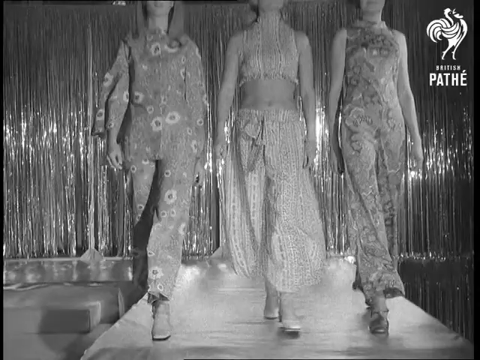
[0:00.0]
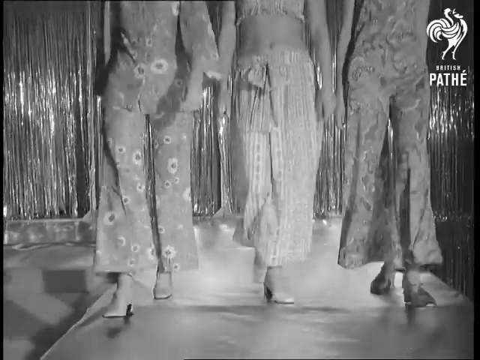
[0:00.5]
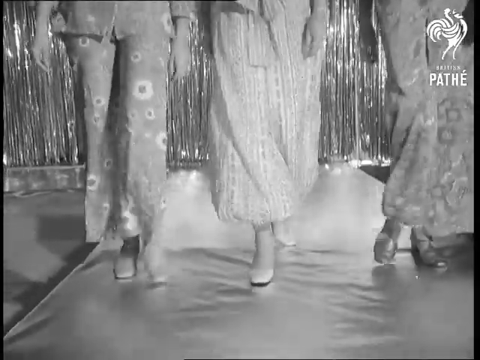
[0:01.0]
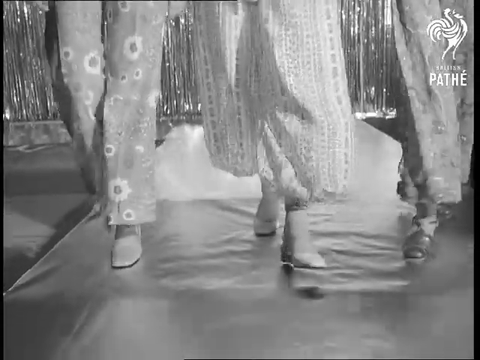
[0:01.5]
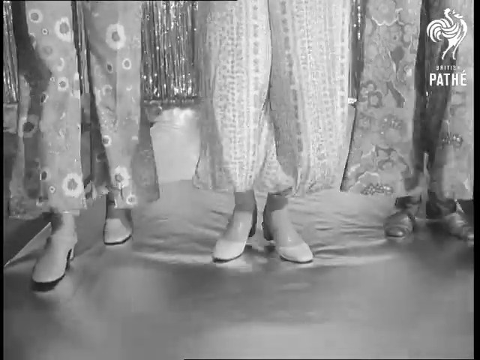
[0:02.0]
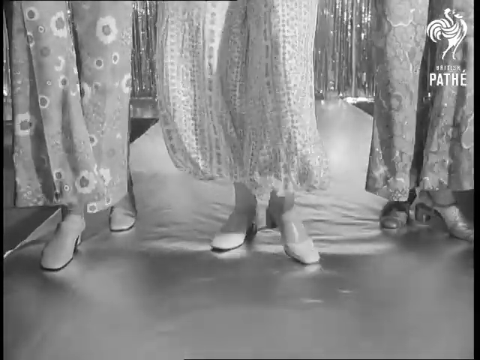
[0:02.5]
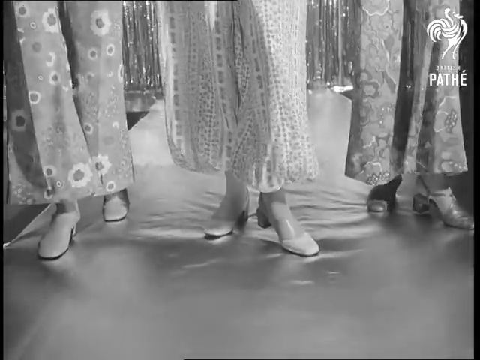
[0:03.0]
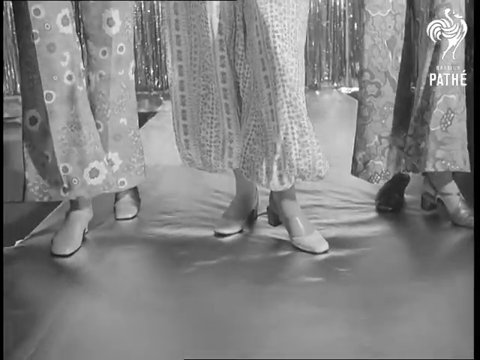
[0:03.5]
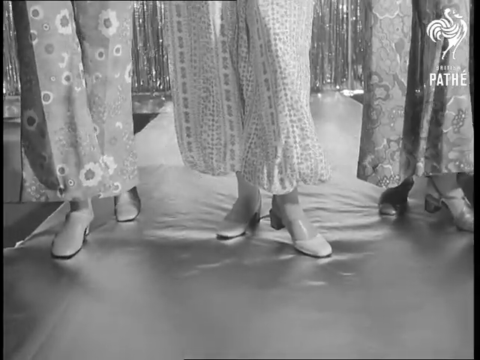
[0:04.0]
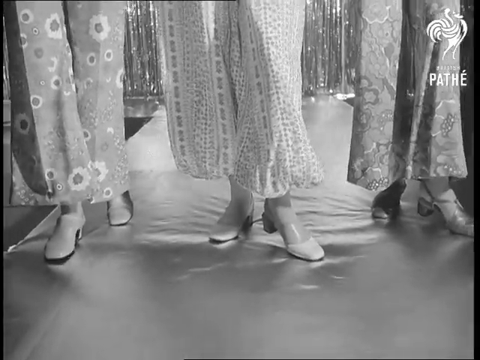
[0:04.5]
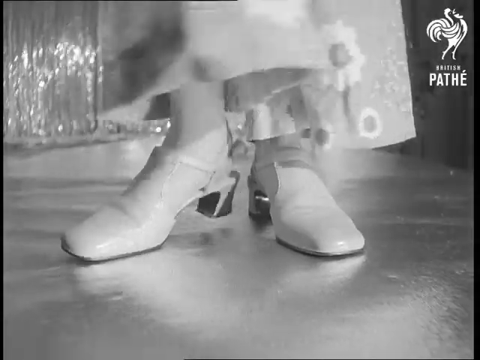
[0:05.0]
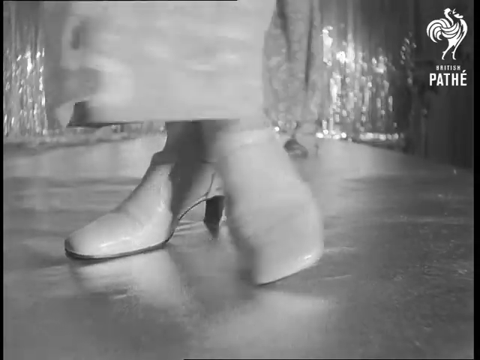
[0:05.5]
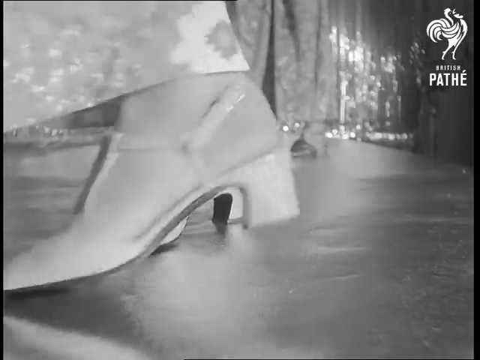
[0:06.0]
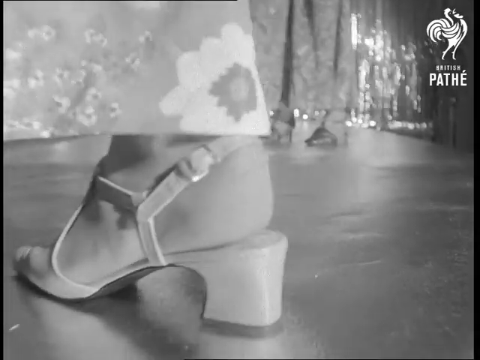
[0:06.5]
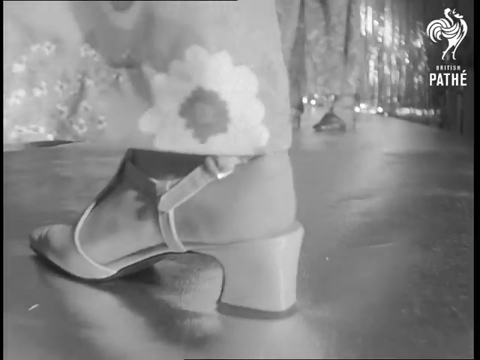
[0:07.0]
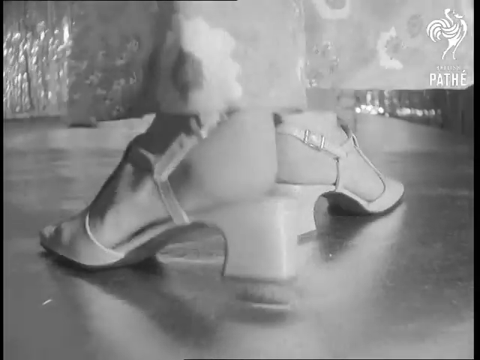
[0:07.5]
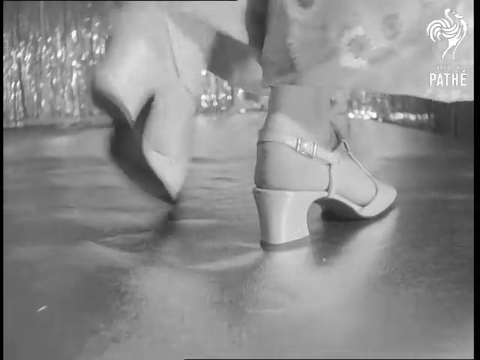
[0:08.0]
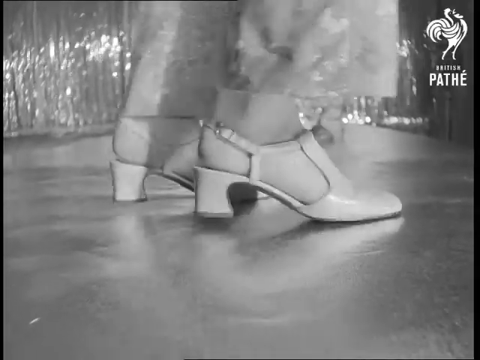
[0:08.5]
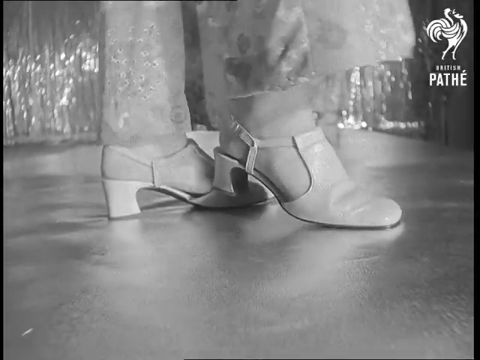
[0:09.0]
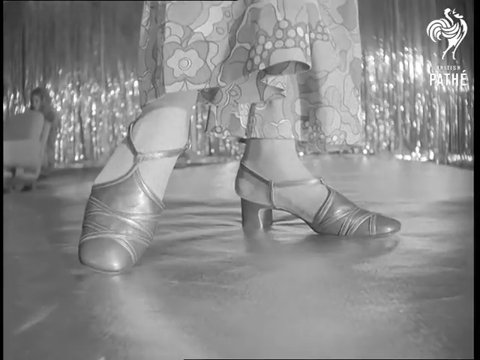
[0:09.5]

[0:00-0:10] The footage looks like it is from the 70s or 80s. A shoe fashion show is taking place, with three ladies modeling. Their shoes look stylish, and they walk as if they know exactly what they are doing.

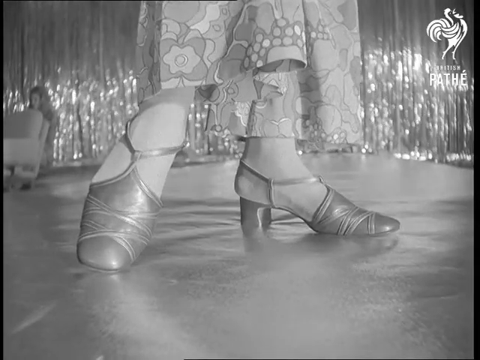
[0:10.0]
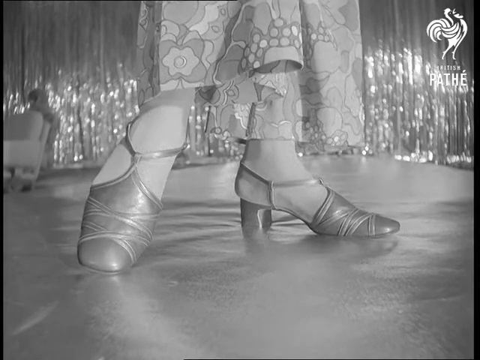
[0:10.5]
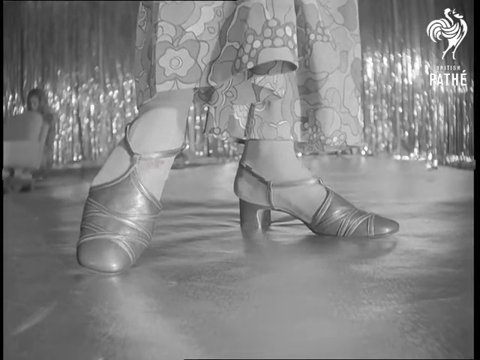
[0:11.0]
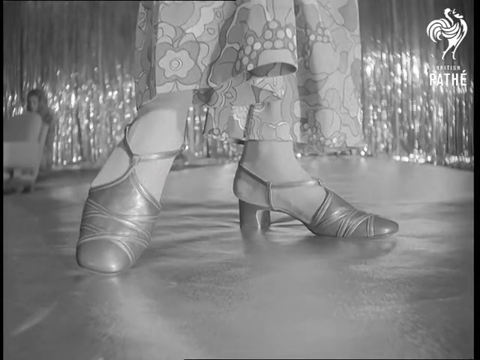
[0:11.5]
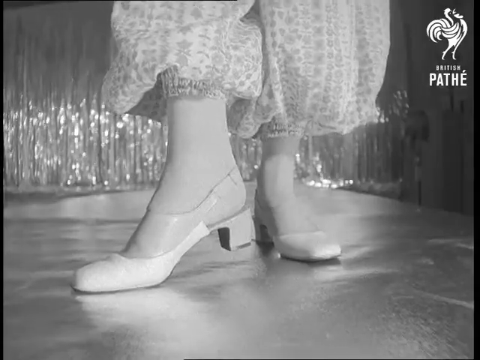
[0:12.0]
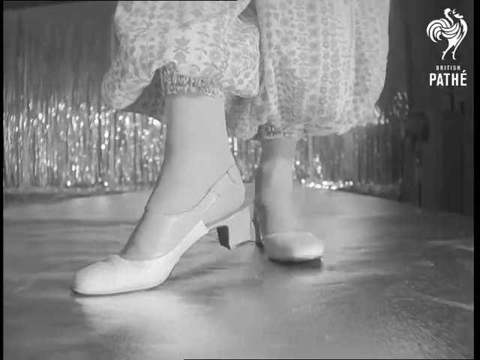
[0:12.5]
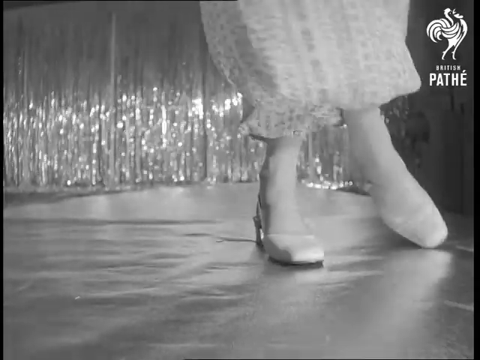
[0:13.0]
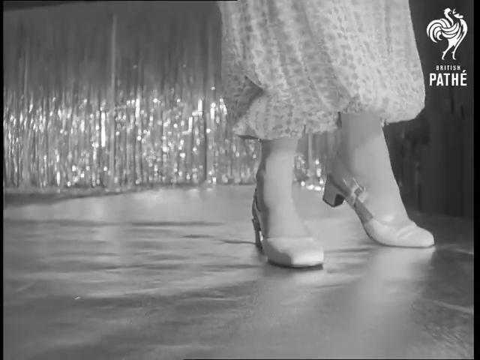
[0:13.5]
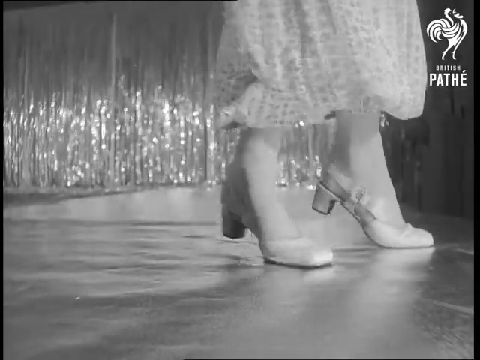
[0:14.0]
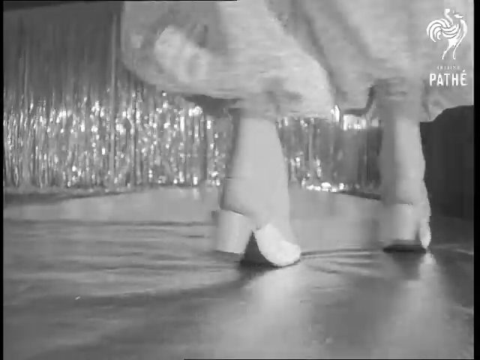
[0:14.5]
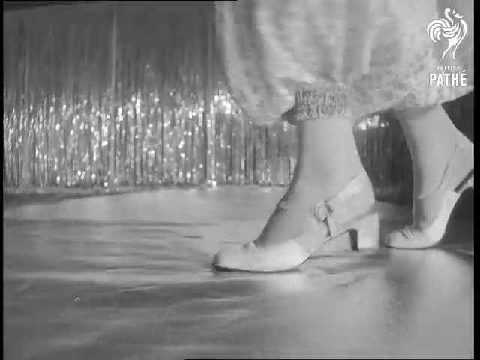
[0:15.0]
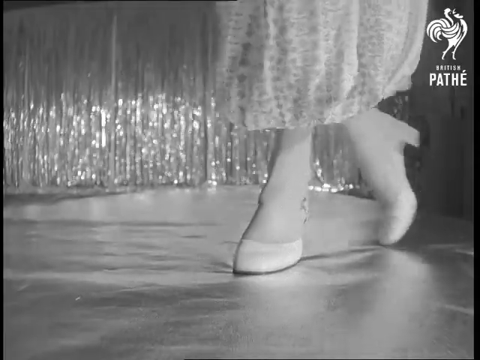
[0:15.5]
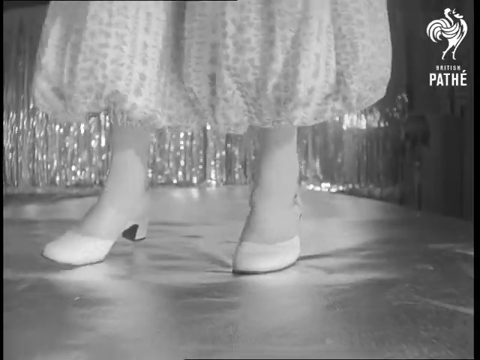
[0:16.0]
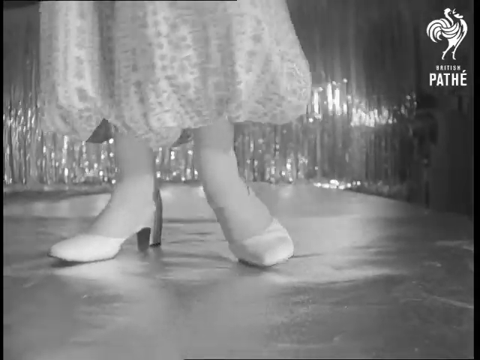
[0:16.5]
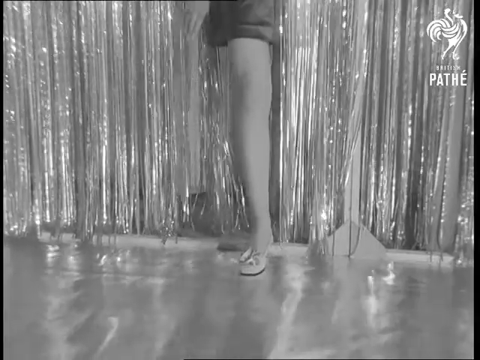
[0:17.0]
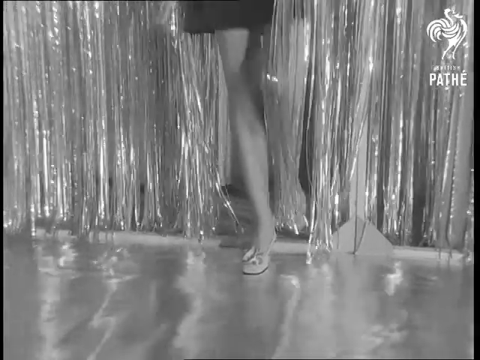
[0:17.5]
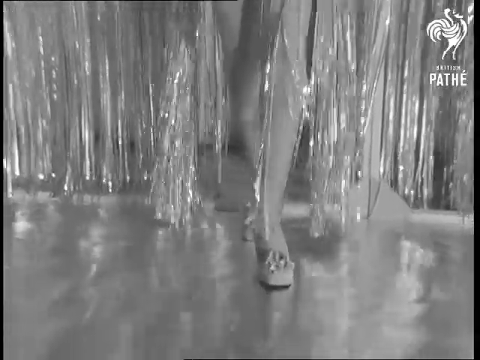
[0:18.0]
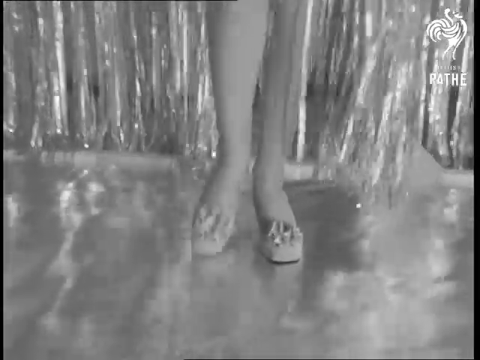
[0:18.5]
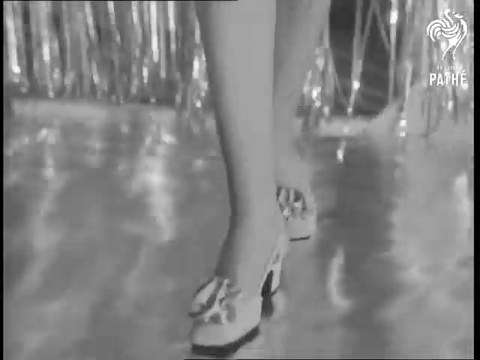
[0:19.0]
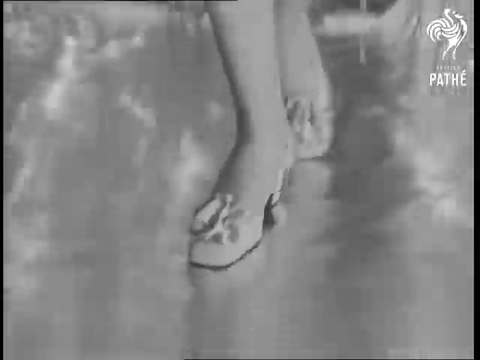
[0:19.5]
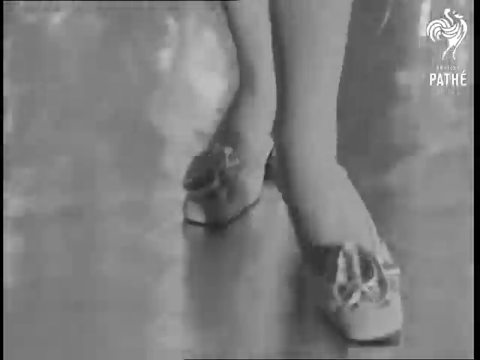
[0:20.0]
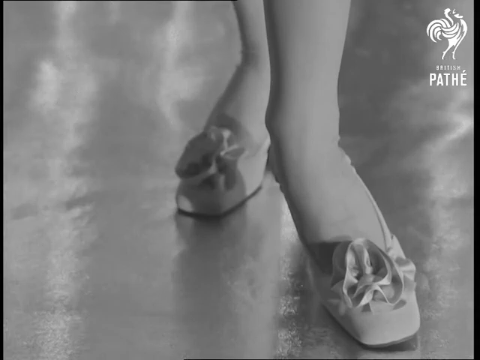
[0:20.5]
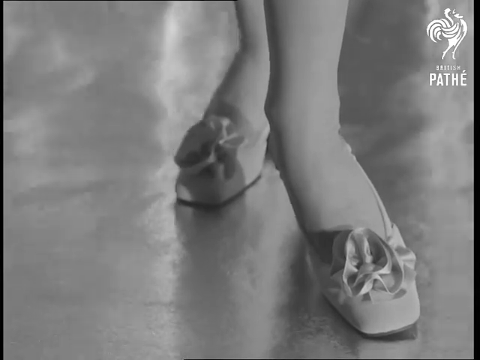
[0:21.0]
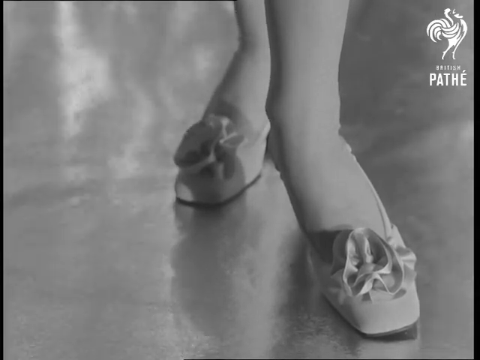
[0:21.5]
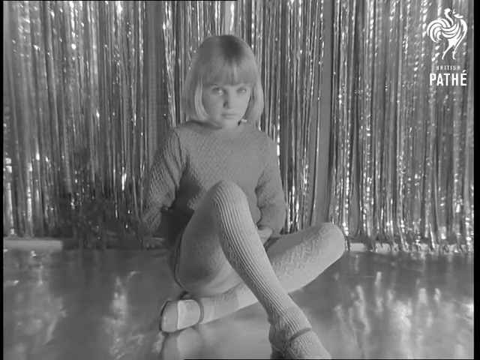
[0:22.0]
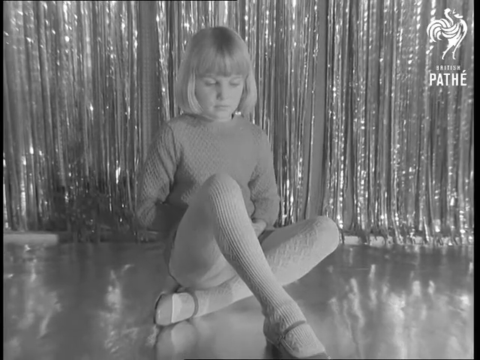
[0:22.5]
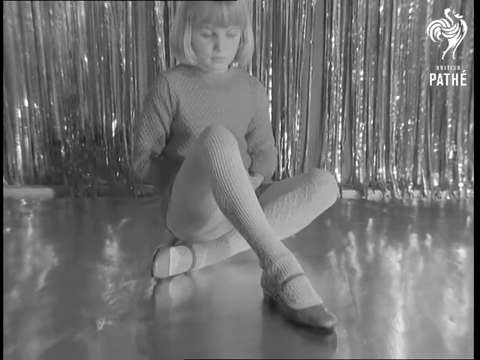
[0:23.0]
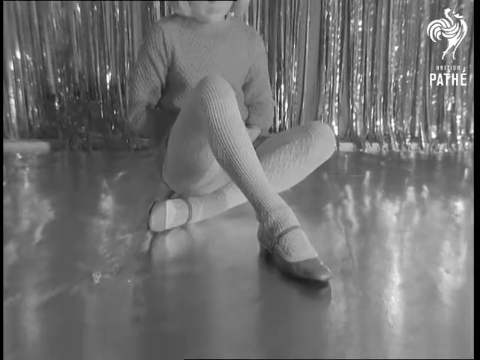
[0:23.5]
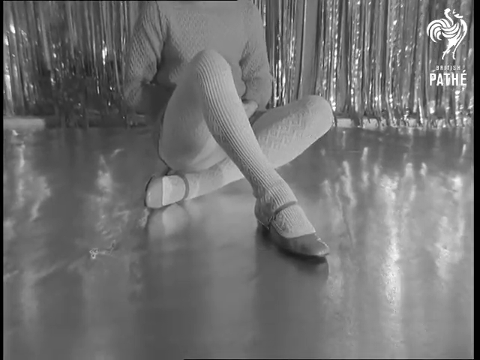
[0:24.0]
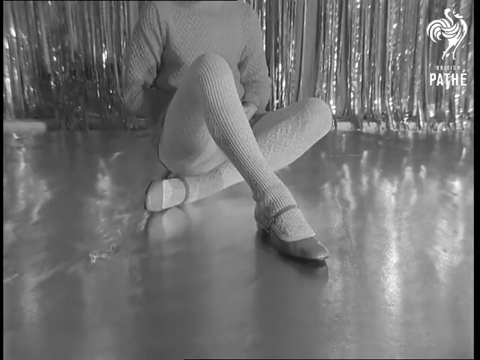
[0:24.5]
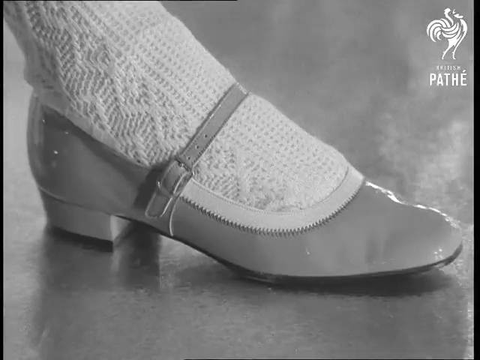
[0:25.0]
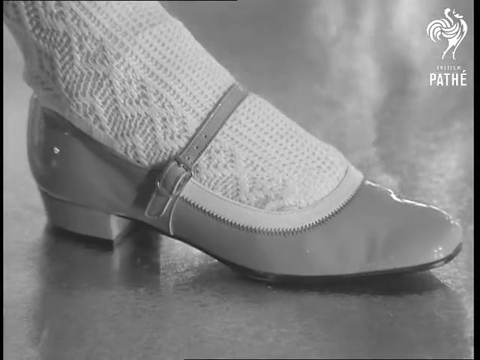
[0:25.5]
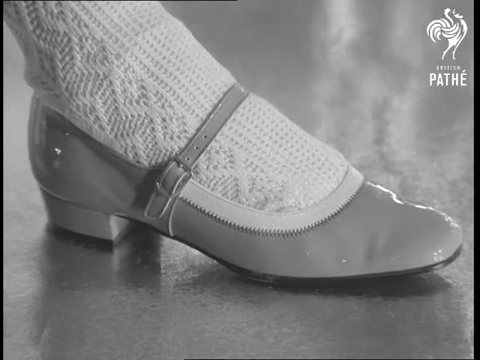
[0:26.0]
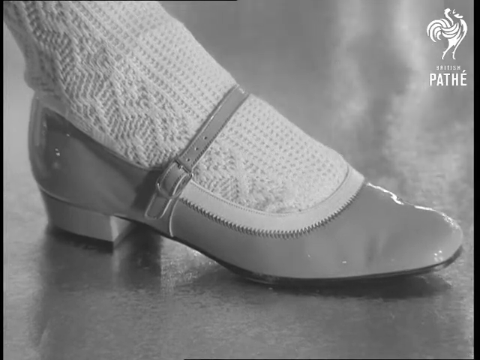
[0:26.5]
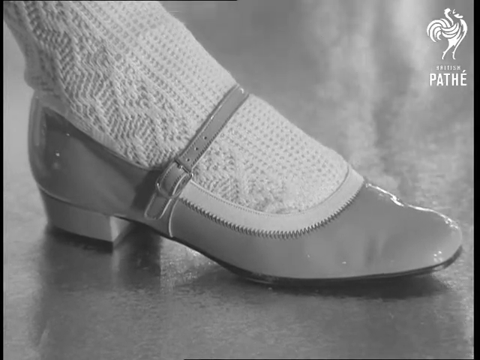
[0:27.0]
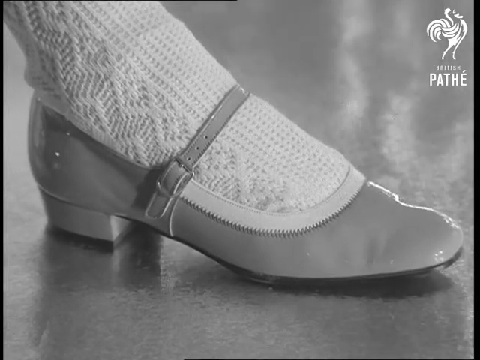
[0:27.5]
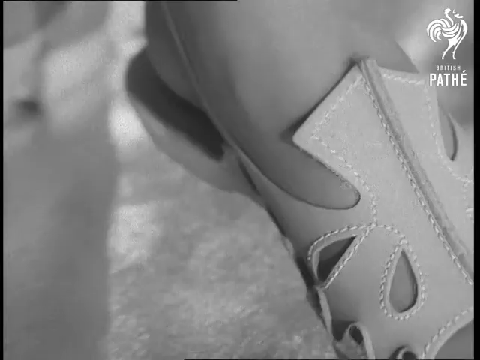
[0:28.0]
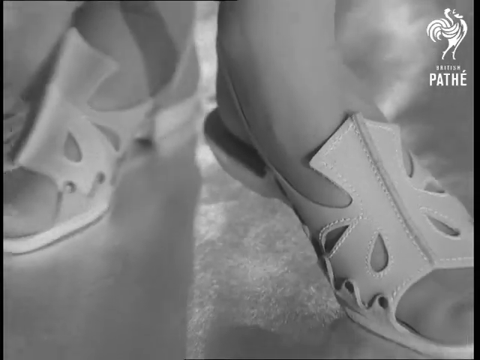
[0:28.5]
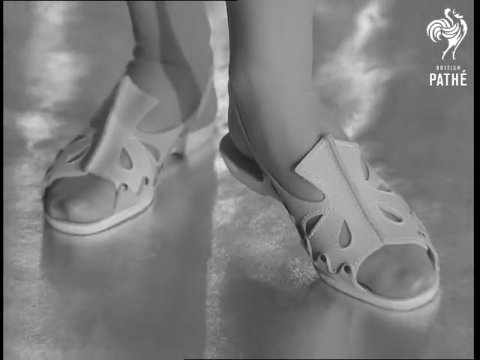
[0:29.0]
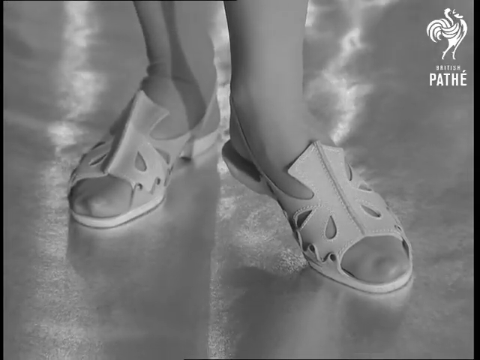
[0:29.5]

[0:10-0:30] A model walks confidently in the shoes she is wearing, which look brand new. A second model shows another shoe, which looks fine but not especially pretty. A kid with blonde hair is shown sitting in the background, enjoying the show. The models seem comfortable and confident.